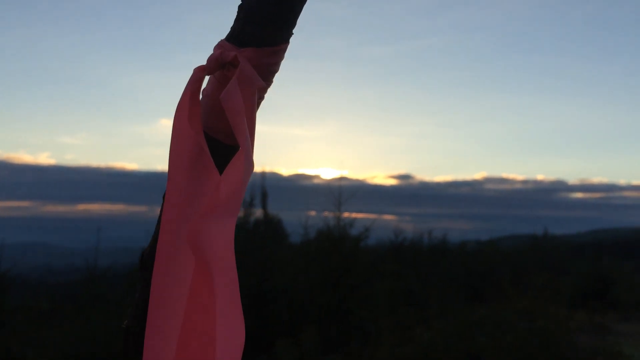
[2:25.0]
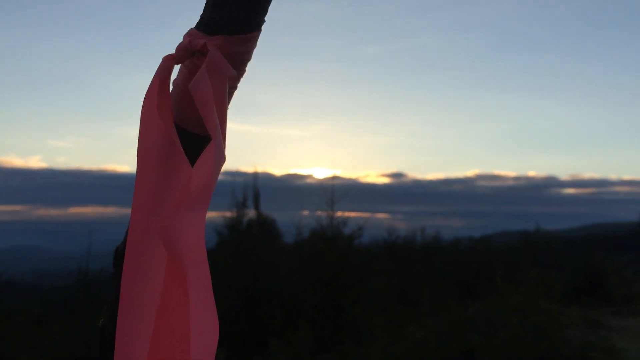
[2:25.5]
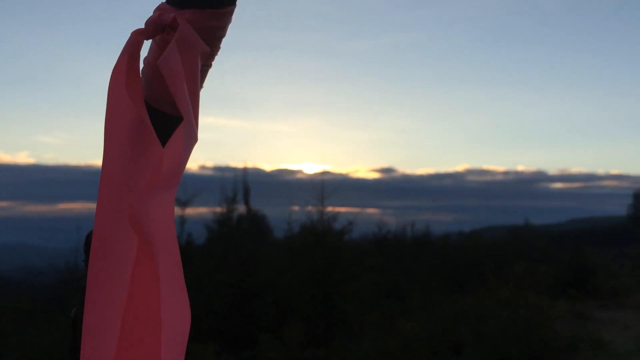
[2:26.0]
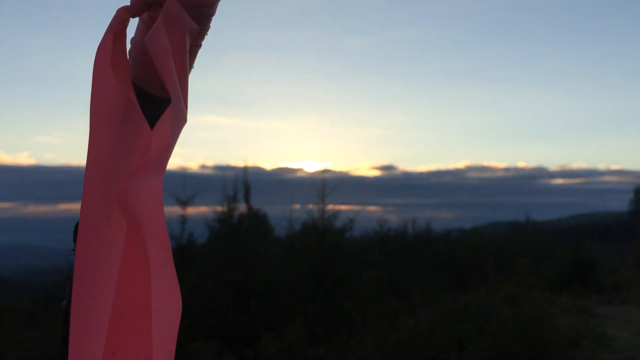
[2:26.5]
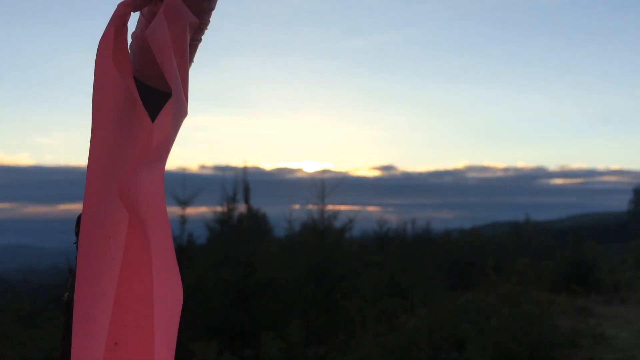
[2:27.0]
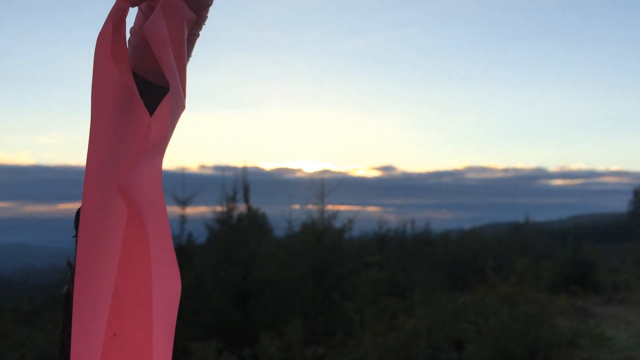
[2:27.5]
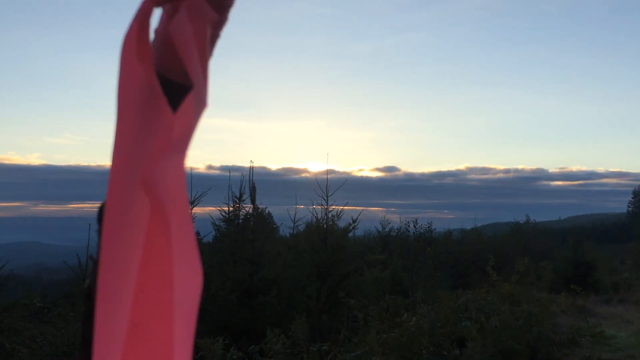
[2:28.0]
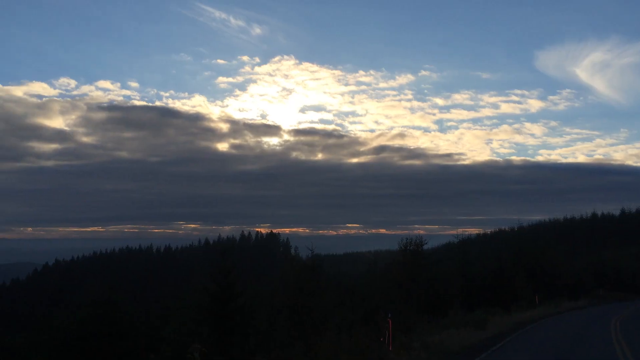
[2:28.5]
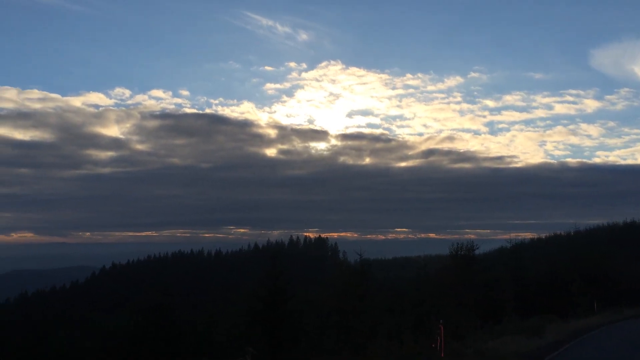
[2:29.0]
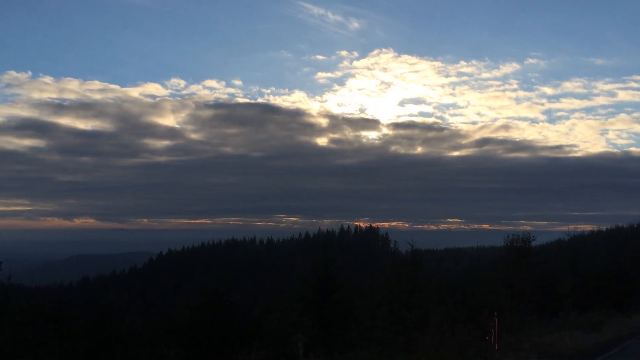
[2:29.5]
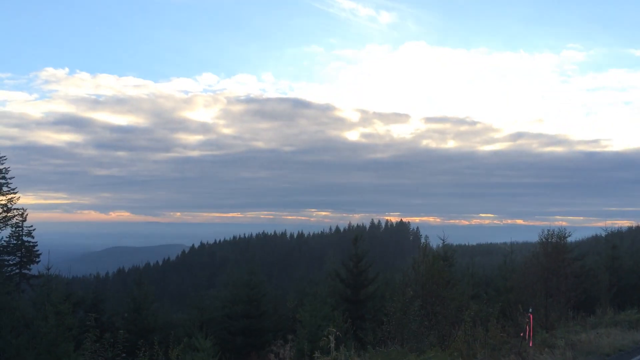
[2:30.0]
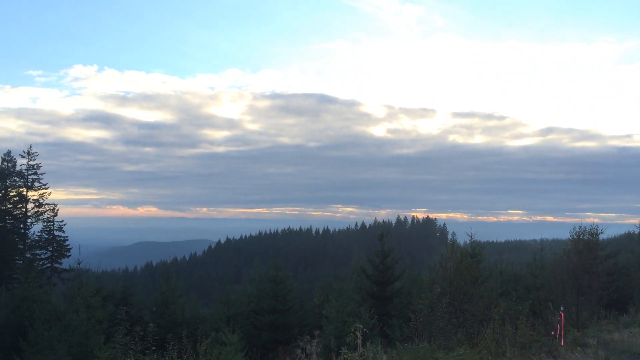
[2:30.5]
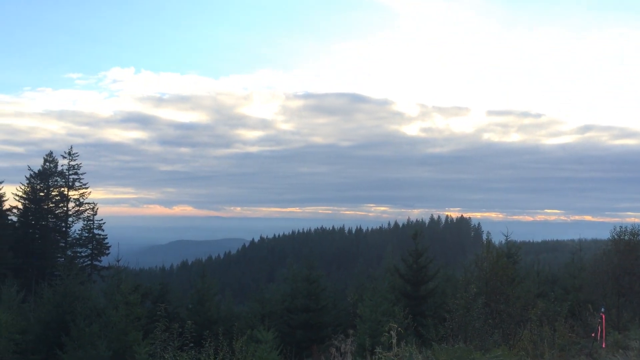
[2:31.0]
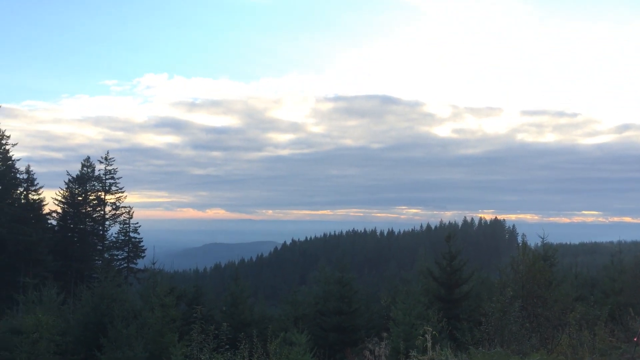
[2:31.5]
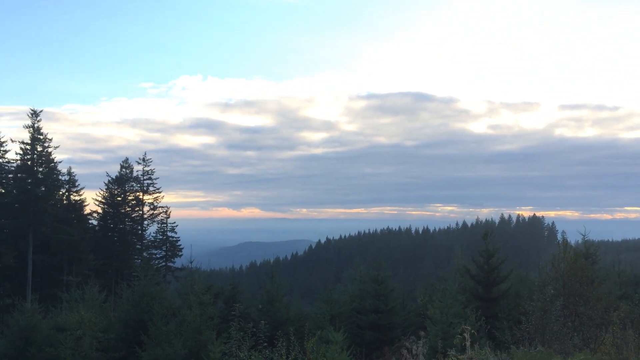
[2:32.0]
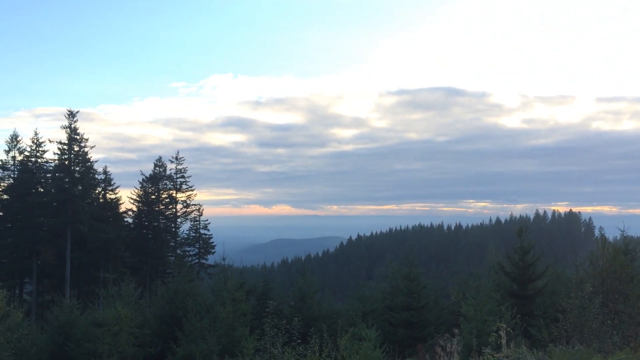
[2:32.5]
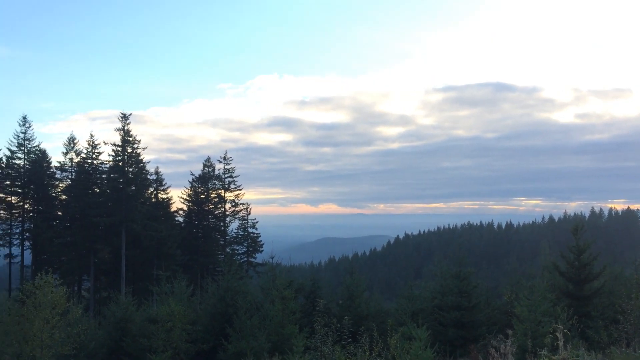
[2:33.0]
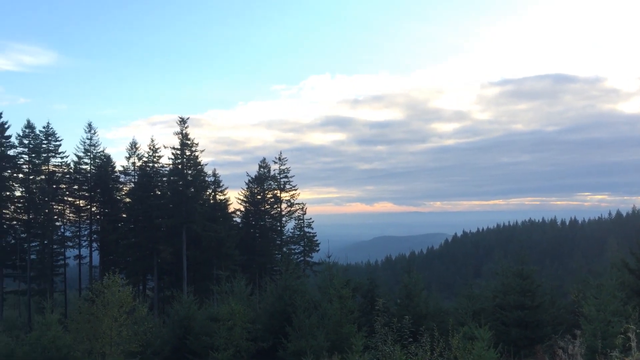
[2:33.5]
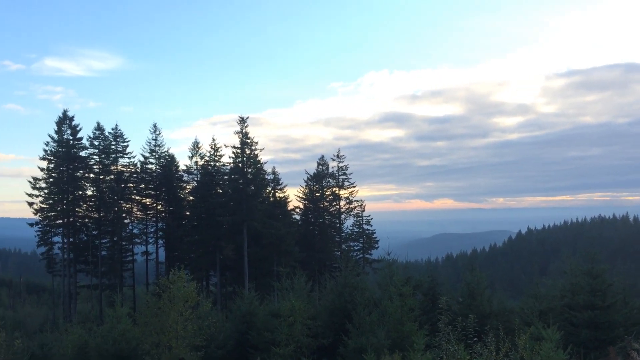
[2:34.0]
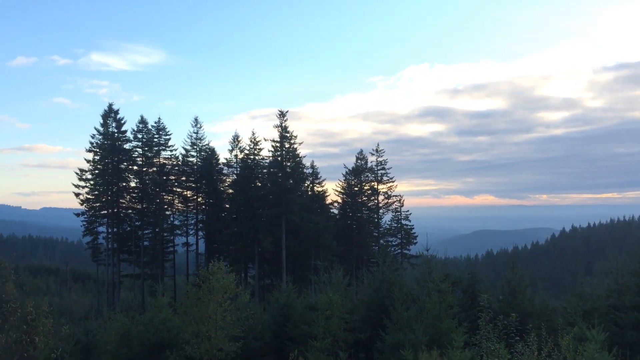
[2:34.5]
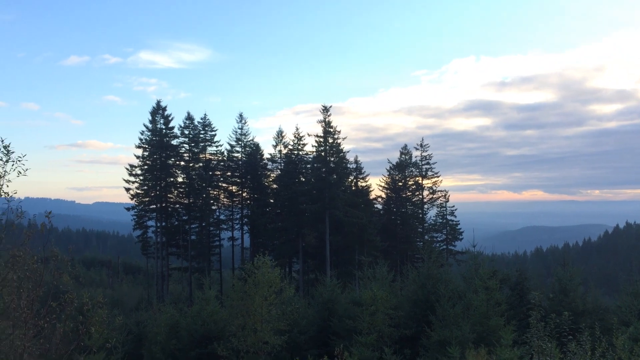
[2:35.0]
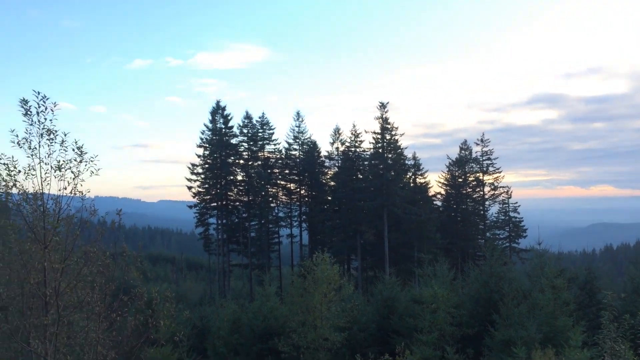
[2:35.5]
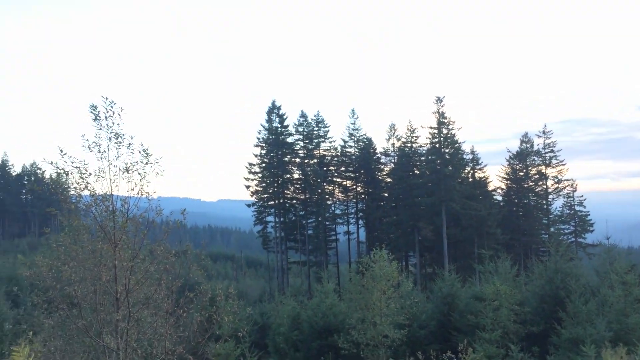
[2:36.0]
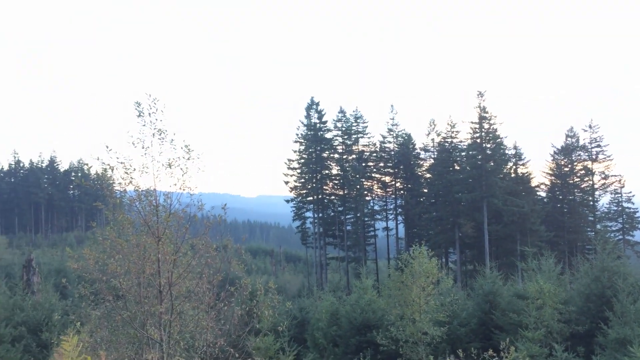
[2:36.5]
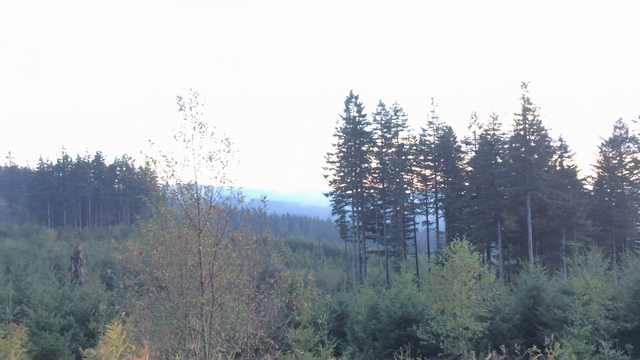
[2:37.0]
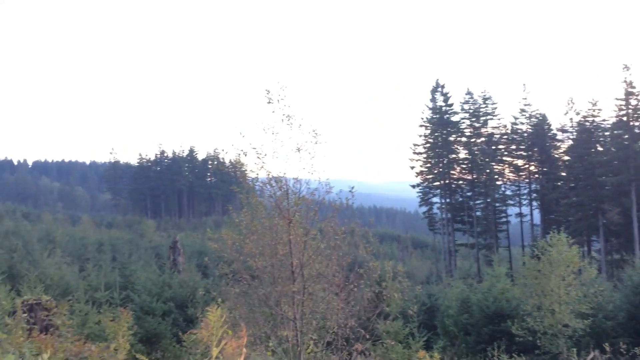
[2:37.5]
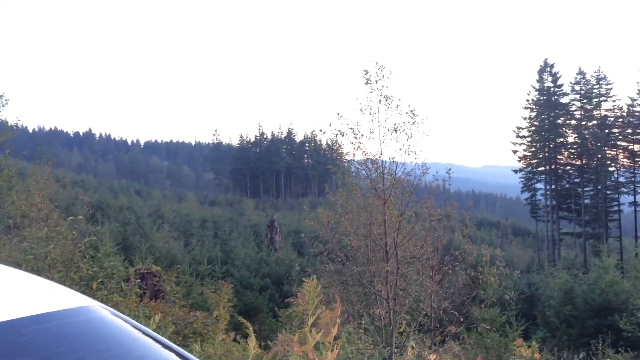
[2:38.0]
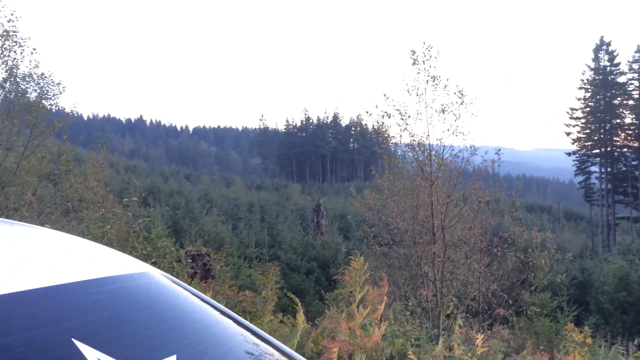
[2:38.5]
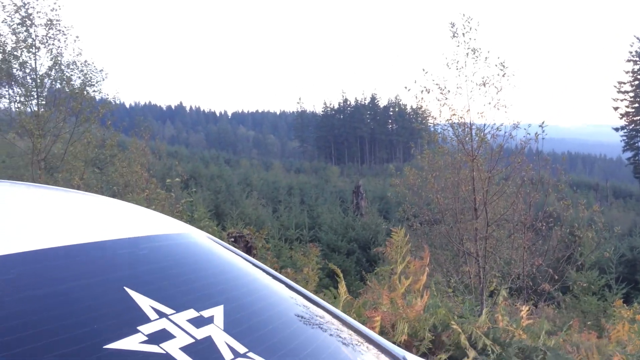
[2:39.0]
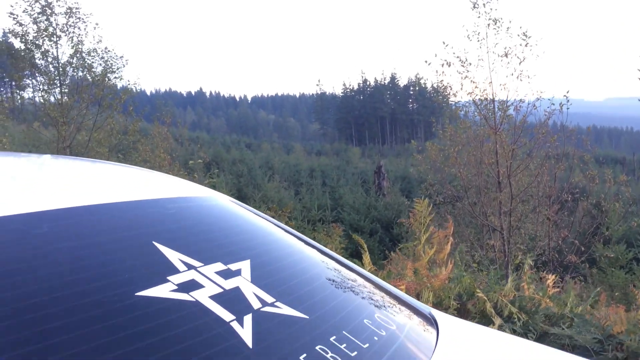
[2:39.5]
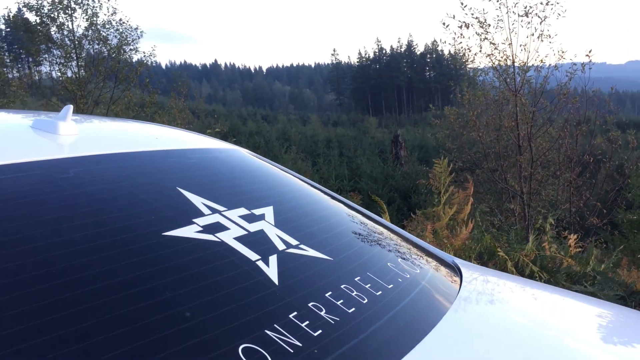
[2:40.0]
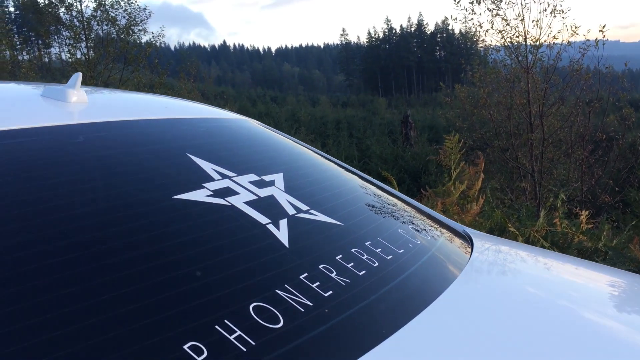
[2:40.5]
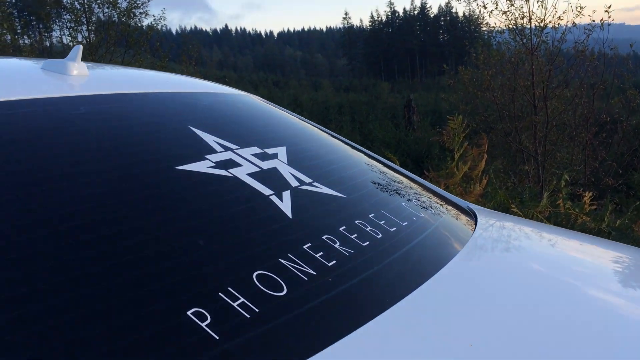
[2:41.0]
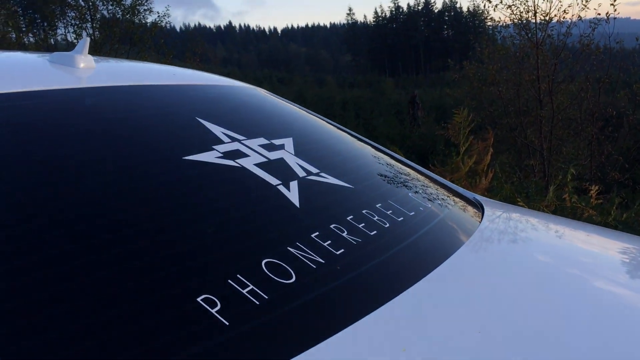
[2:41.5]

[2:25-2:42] The shot starts on the pink ribbon around the branch, which appears to be in the mountainside woodland area. A panning shot moves from right to left across the mountainside woodland, showing a lot of green foliage, trees and bushes, then drops down to the back of the white Audi, which has something on it that cannot be made out. The video jumps back to the pink-wrapped branch, then cuts to the landscape panning from right to left under a blue, still cloudy sky. A glare covers the screen as the camera pans left and down, and an insignia that looks like a star is visible at the top of the Audi's back window, with what seems to be some type of design on it that reads something. The landscape pans from right to left again, and some thinning bushes with less foliage appear closer to the camera. The sky goes from very cloudy to much less cloudy from right to left, and there appear to be horizontal lines running across the back windshield as a design.